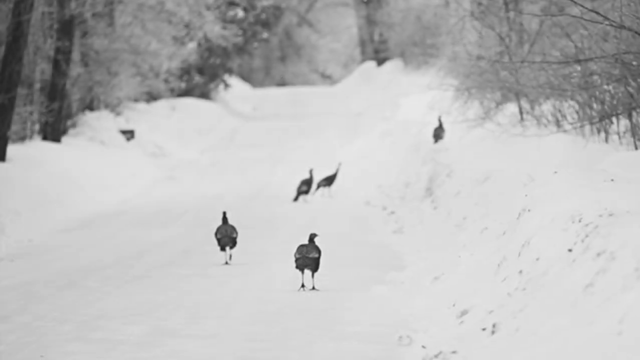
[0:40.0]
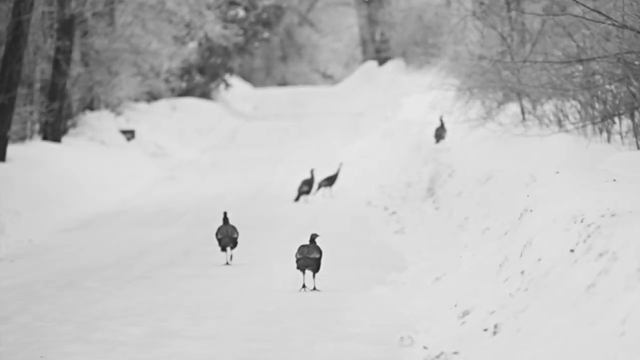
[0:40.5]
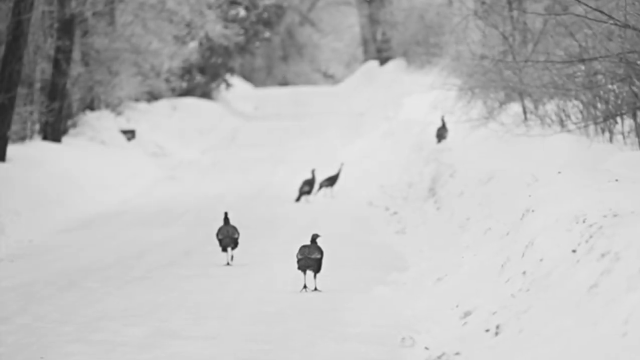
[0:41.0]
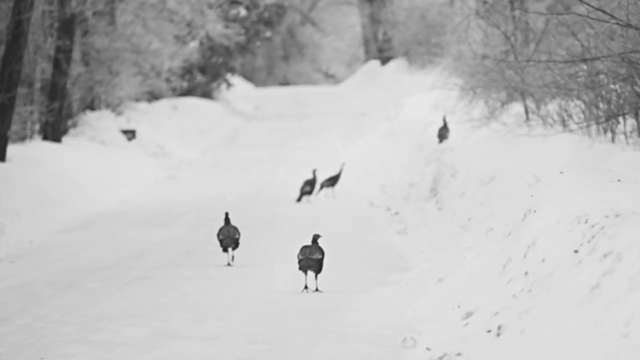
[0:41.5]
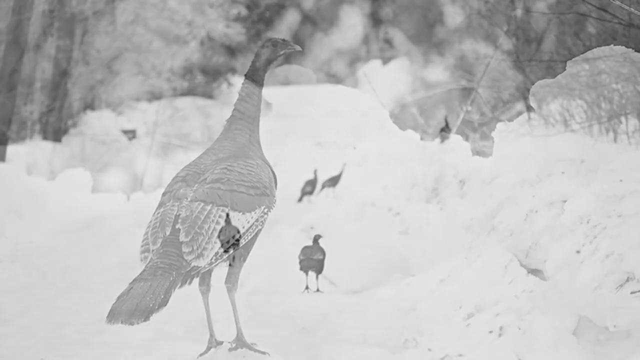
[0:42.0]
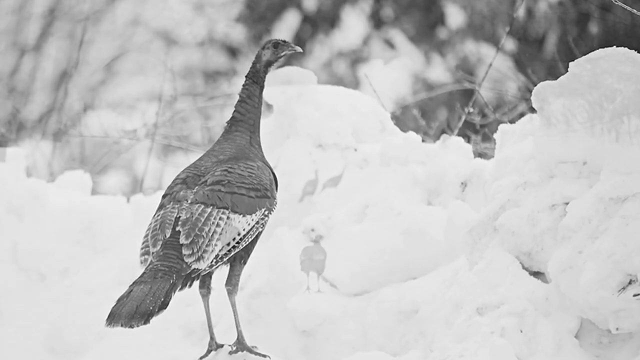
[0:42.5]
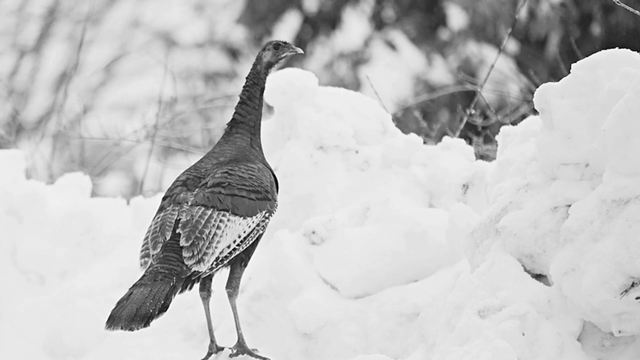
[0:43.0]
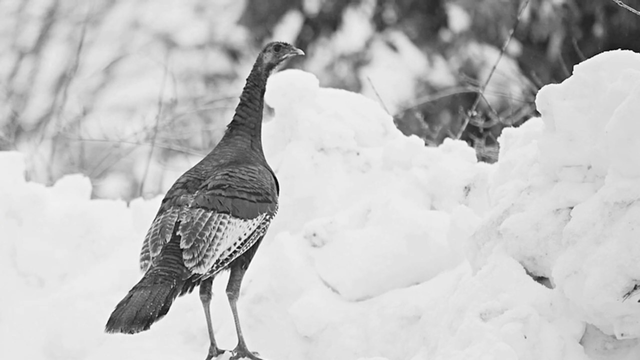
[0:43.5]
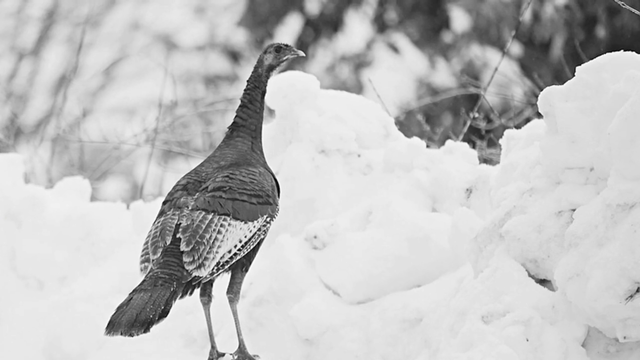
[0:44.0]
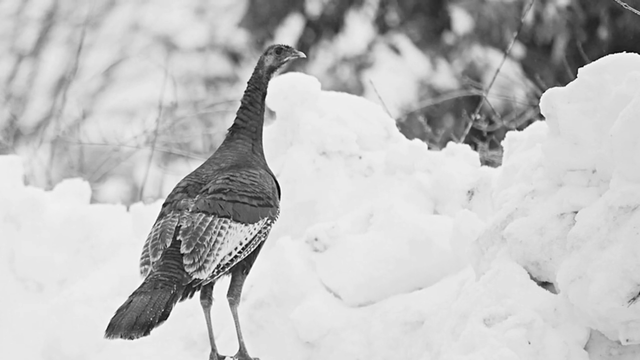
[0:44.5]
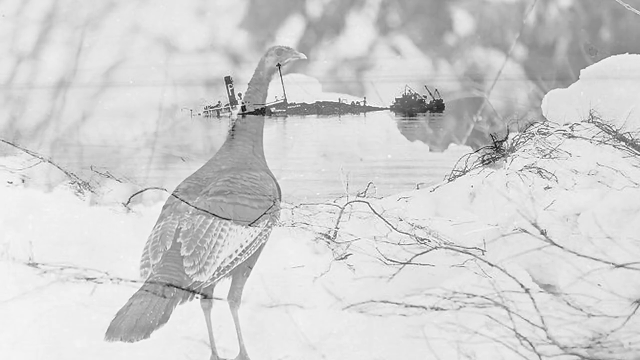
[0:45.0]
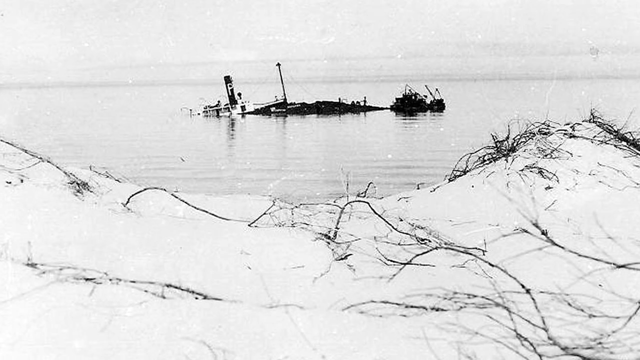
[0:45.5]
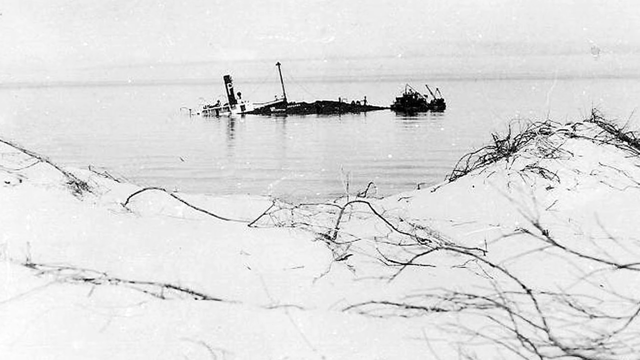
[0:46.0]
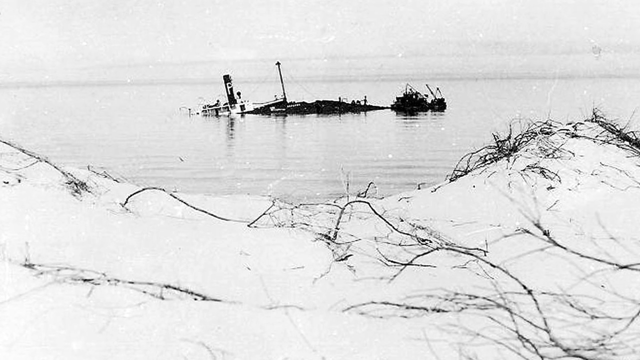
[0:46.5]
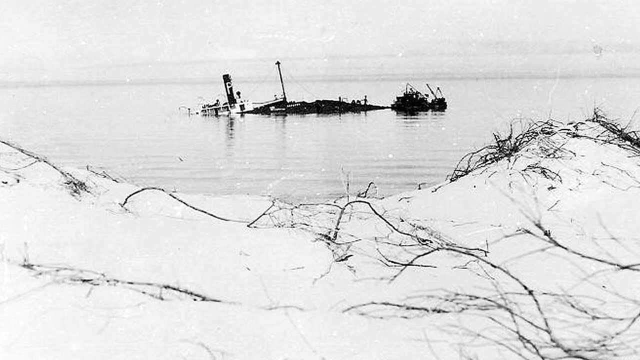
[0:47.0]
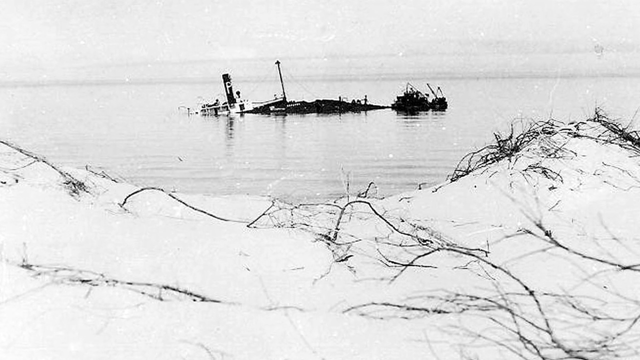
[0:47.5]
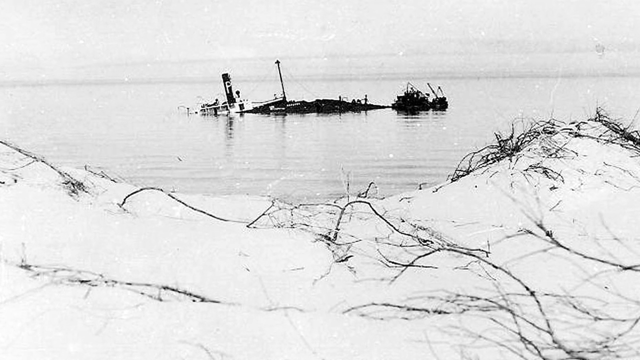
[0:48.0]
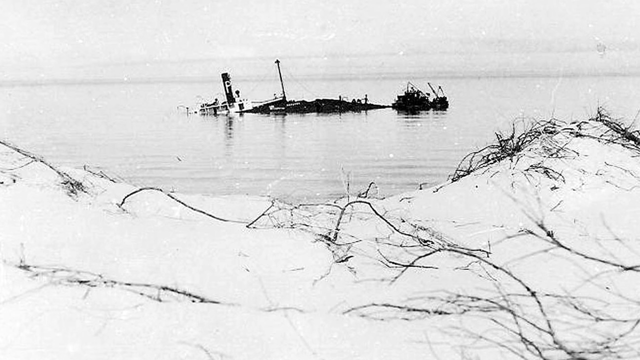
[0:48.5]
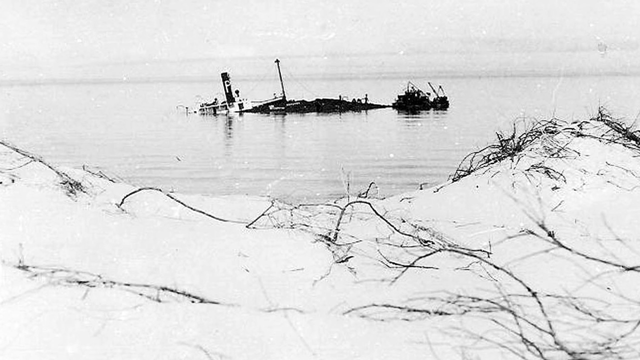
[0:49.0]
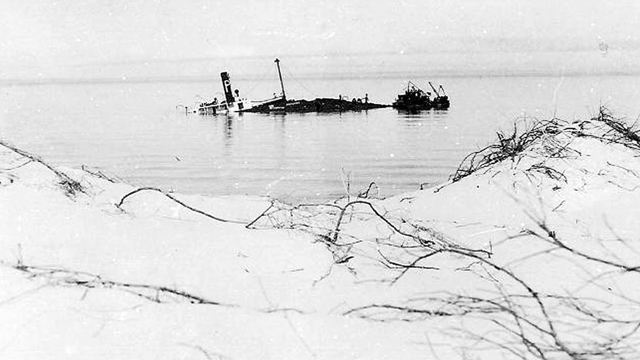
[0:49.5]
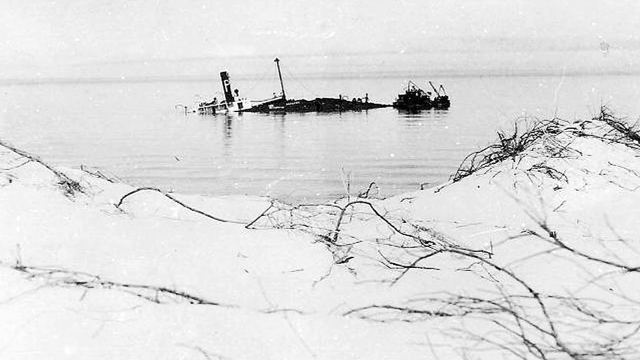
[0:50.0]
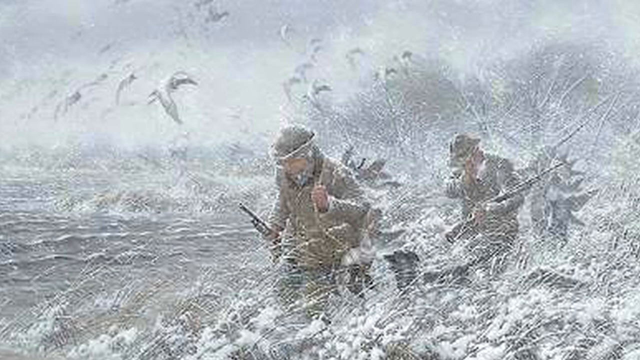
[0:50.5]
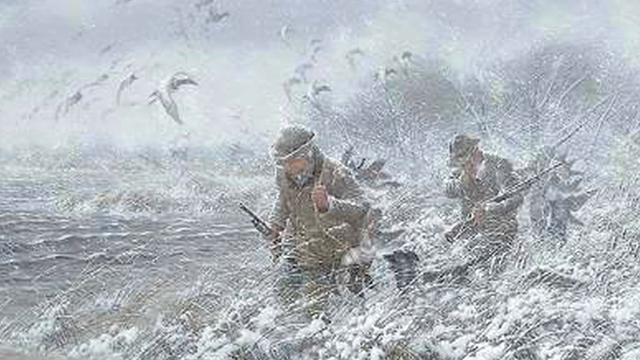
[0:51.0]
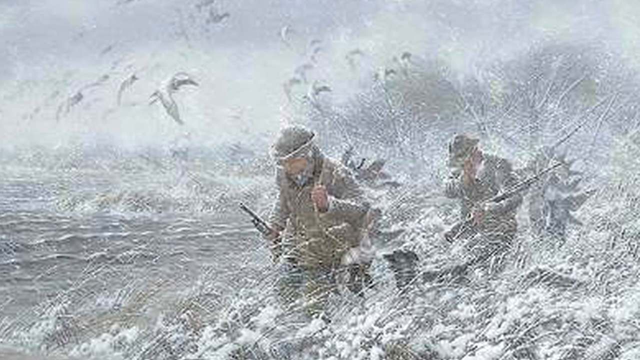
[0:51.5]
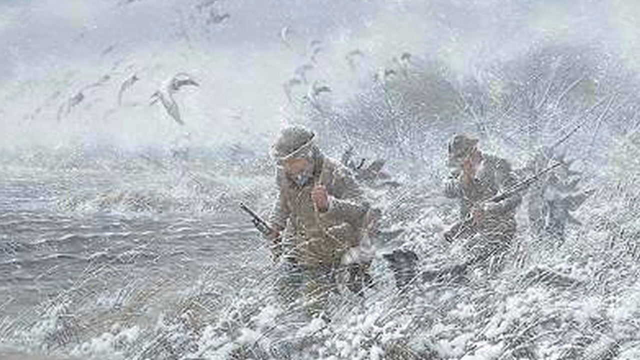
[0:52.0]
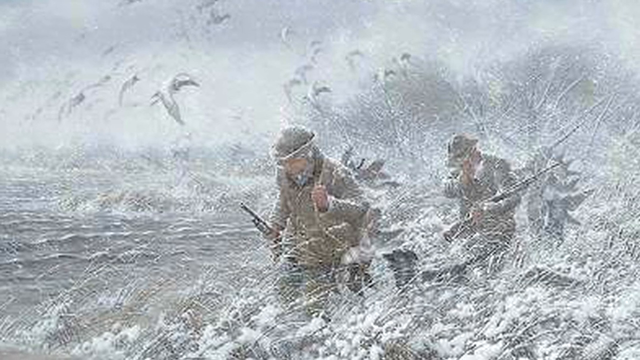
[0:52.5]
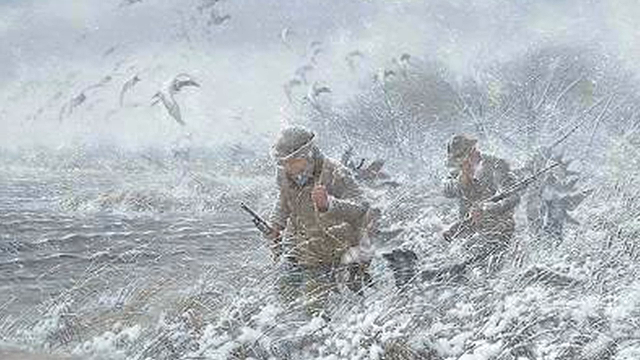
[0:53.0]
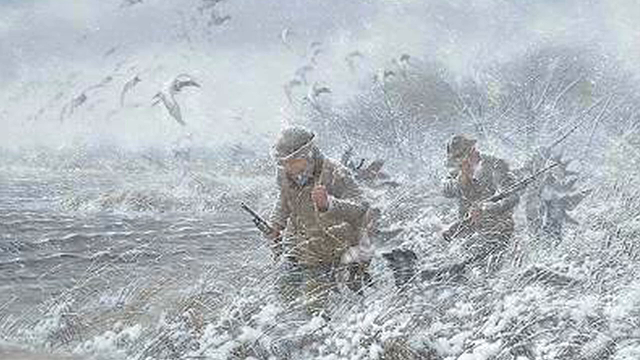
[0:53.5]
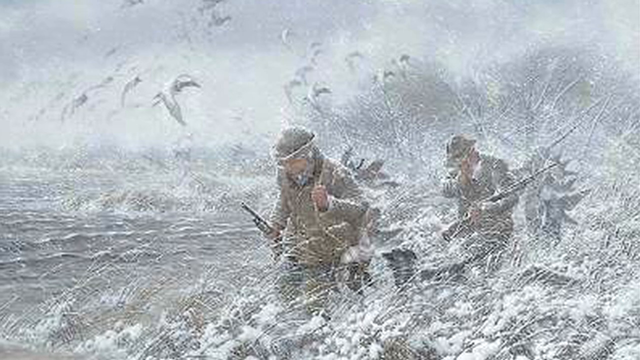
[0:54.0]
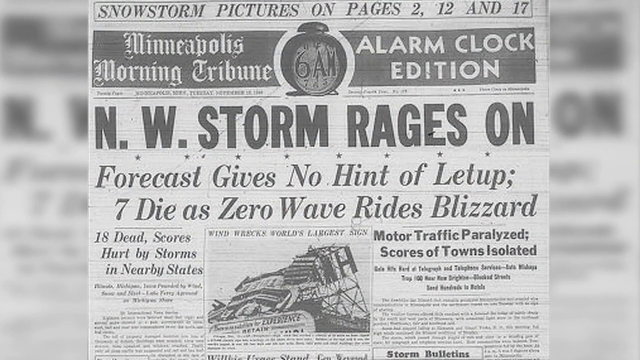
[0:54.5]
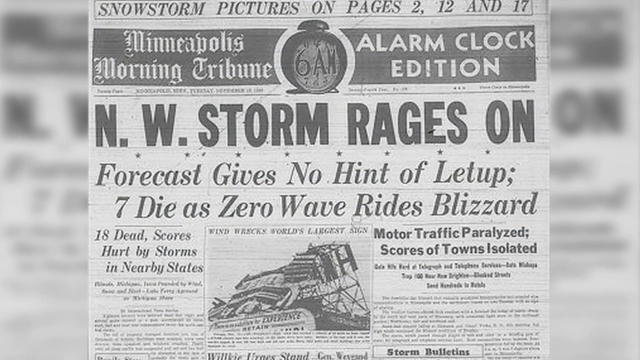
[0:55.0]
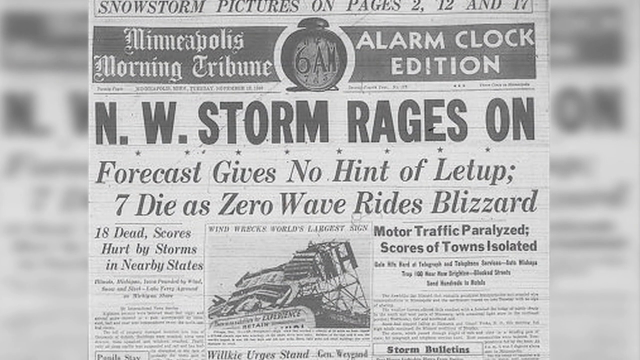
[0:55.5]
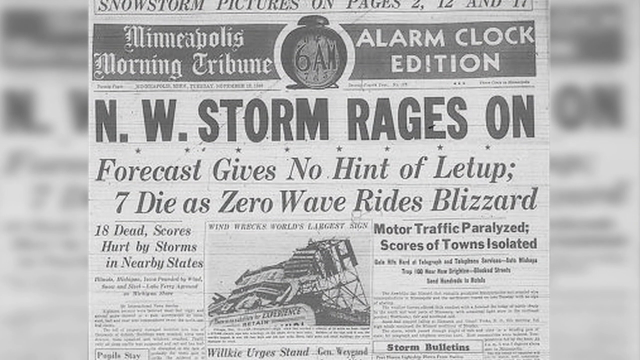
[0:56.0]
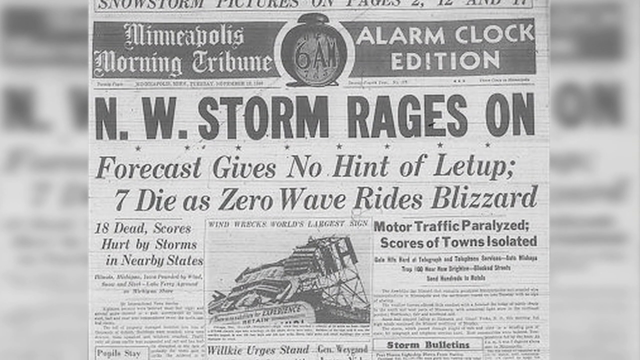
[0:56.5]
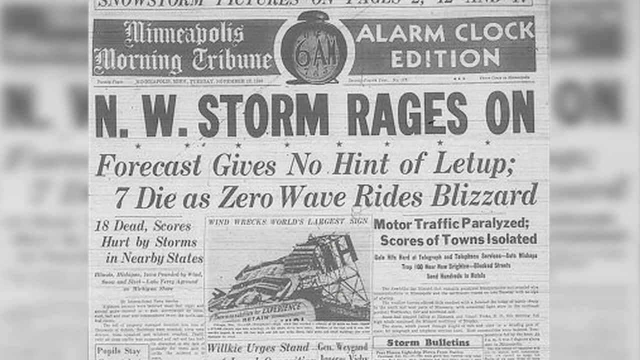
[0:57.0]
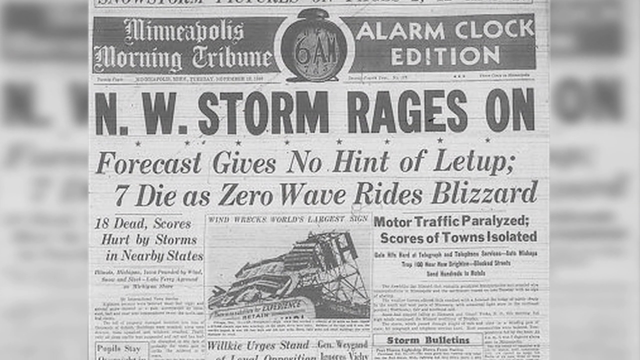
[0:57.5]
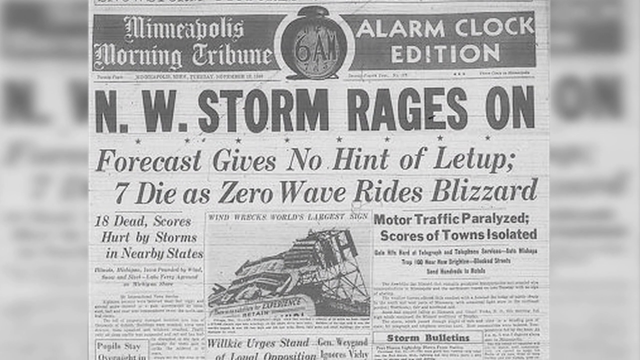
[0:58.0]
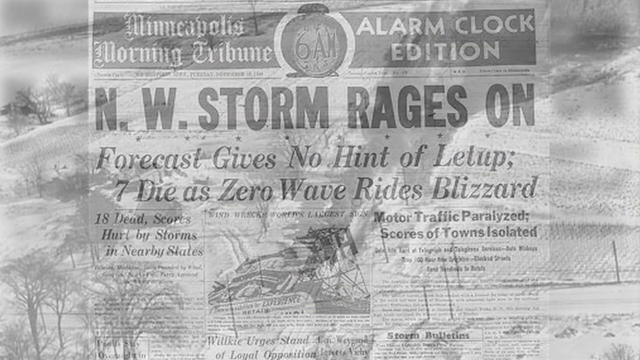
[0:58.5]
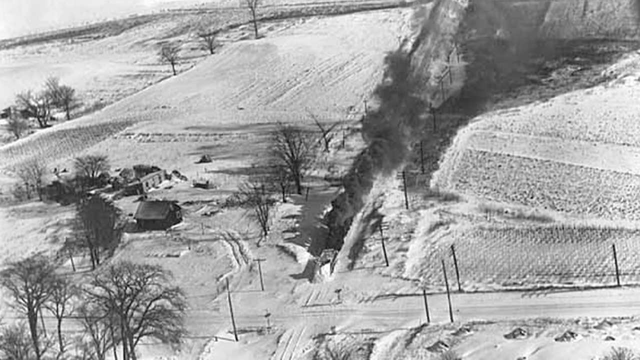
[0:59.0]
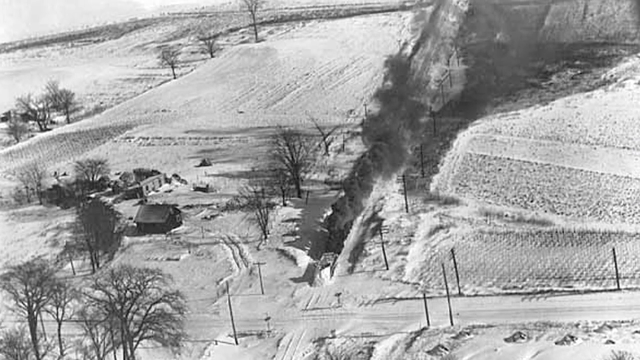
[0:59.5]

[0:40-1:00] A black and white image shows various birds, apparently five of them, walking along a path that cuts through the woods, completely blanketed in snow. A close-up shows one of the birds, which has black feathers with a white tint at the tips and a somewhat scrawny, scraggly head, almost like a vulture's. The video cuts to another black and white image of what appears to be some sort of ship sinking under the water, seen from a snowy bank; only part of it sticks out, making its exact appearance difficult to make out. Next appears what seems to be a drawn image of soldiers marching through a snowy brush. Then a newspaper of the time is shown, stating "N.W. Storm rages on. Forecast gives no hint of letup. Seven die as zero wave rides blizzard." The newspaper is largely full of statistics about the storm and the damage it caused.